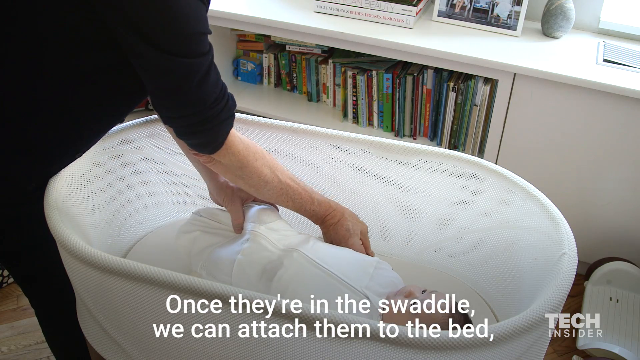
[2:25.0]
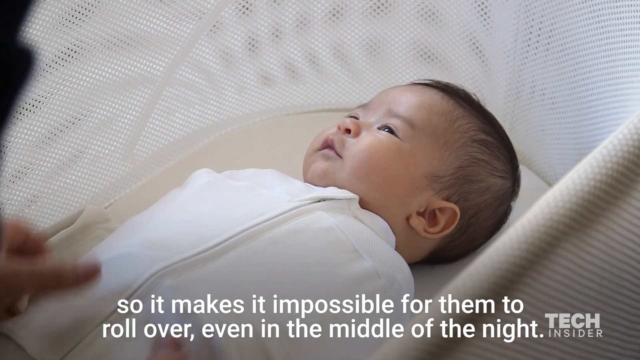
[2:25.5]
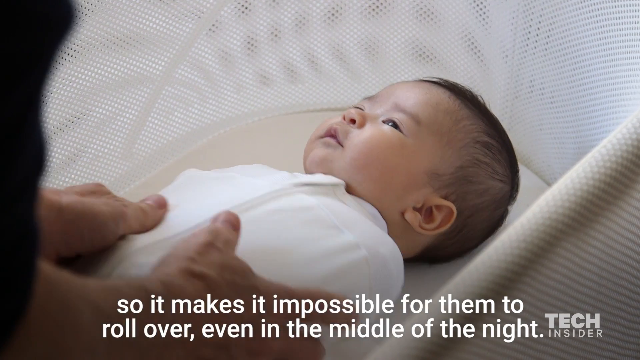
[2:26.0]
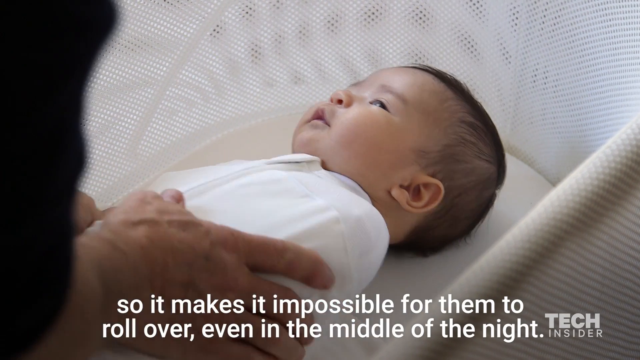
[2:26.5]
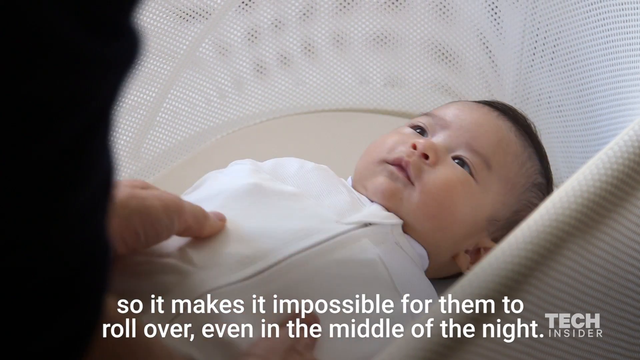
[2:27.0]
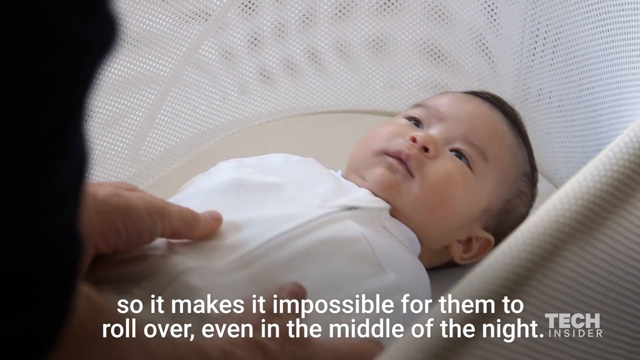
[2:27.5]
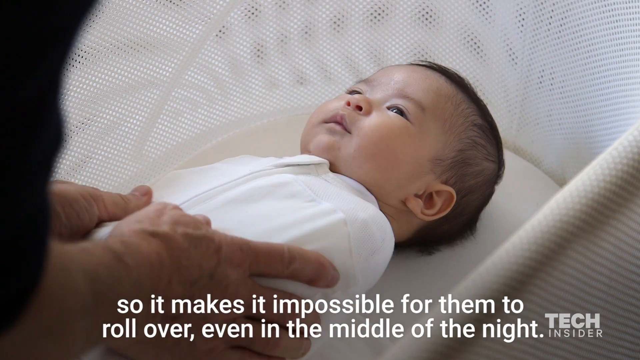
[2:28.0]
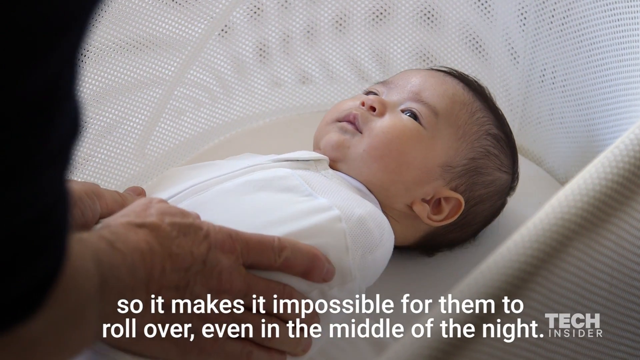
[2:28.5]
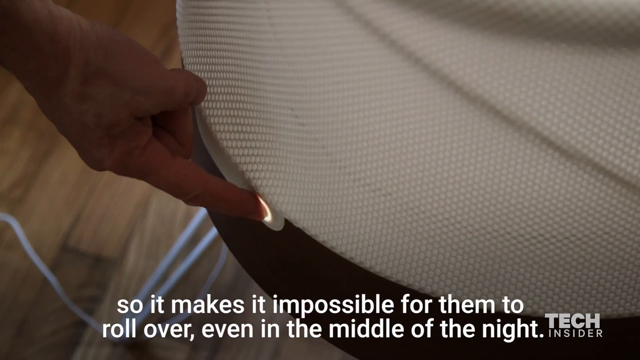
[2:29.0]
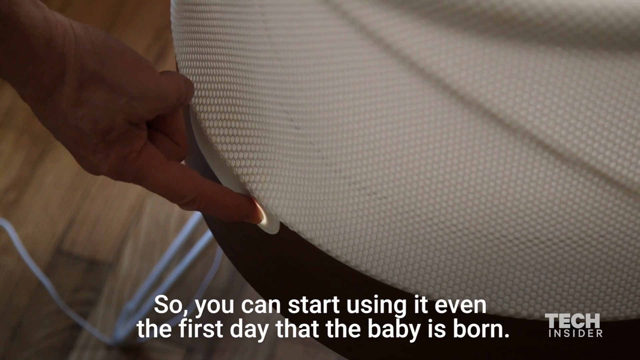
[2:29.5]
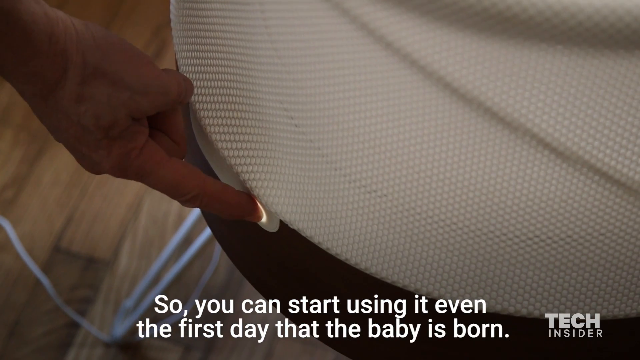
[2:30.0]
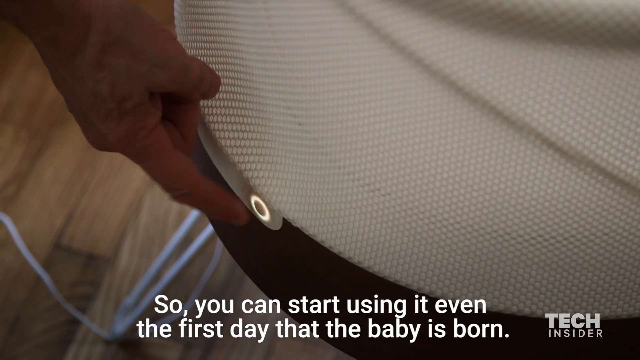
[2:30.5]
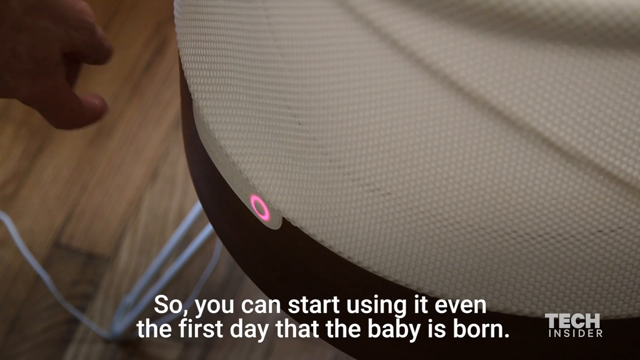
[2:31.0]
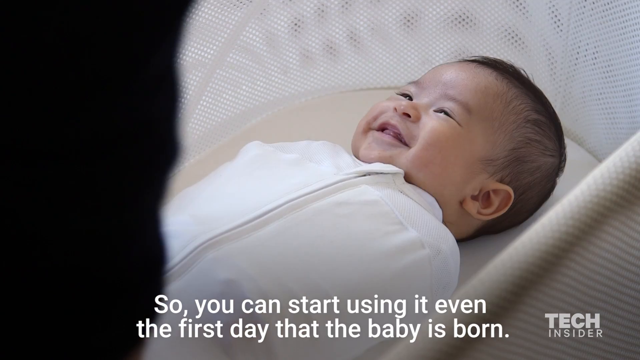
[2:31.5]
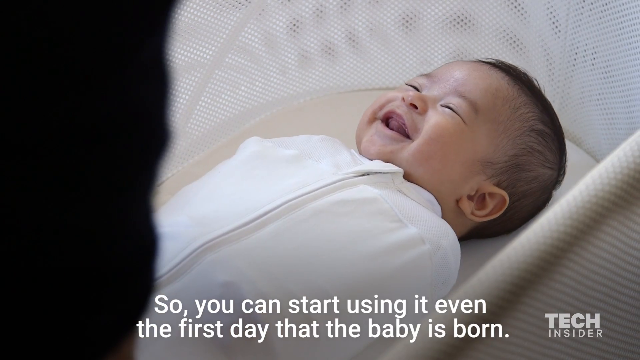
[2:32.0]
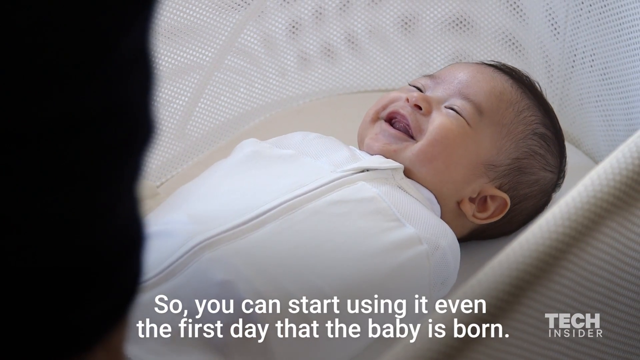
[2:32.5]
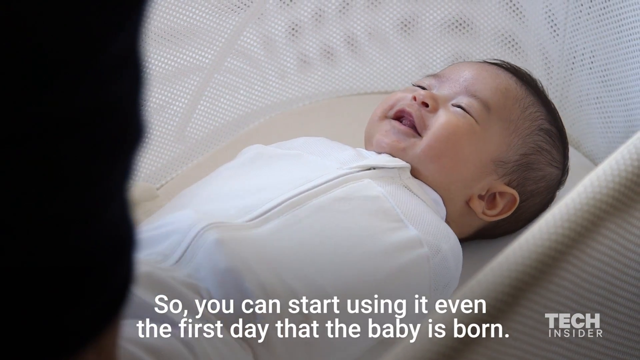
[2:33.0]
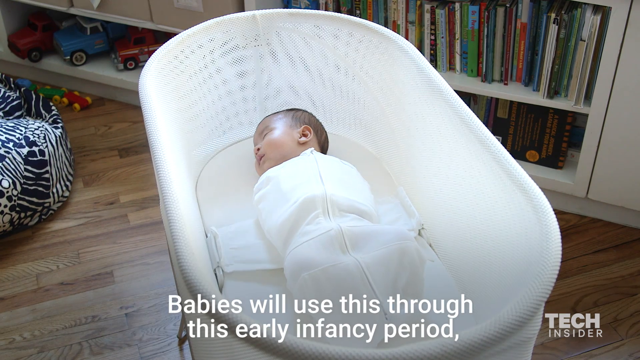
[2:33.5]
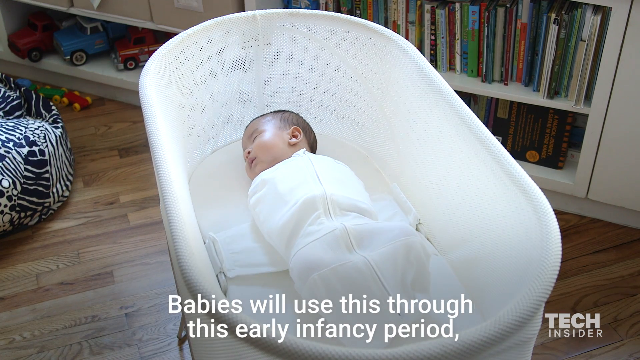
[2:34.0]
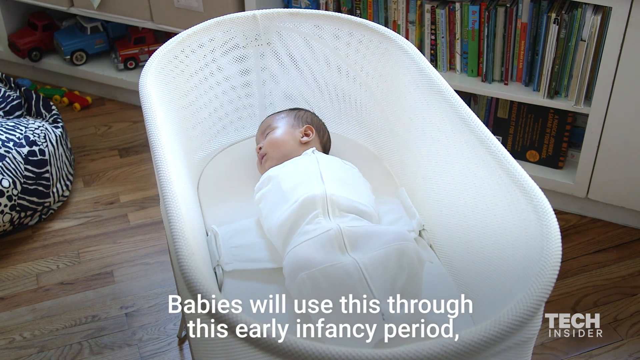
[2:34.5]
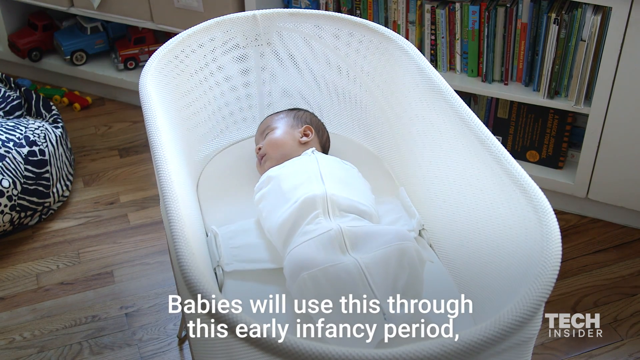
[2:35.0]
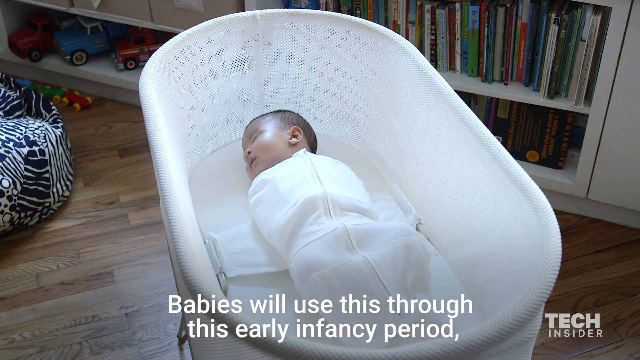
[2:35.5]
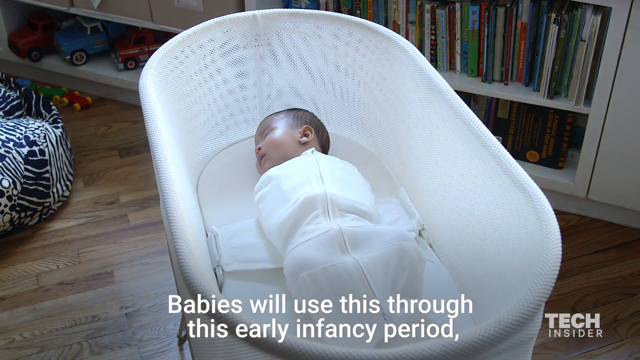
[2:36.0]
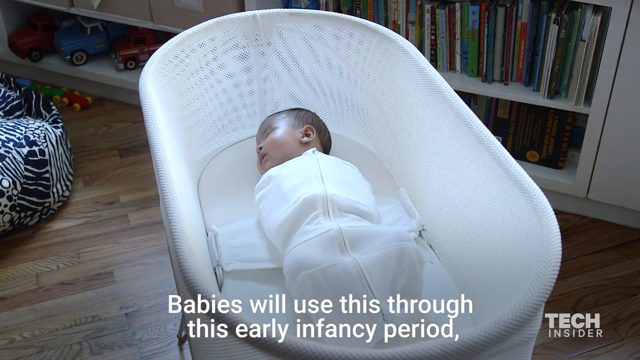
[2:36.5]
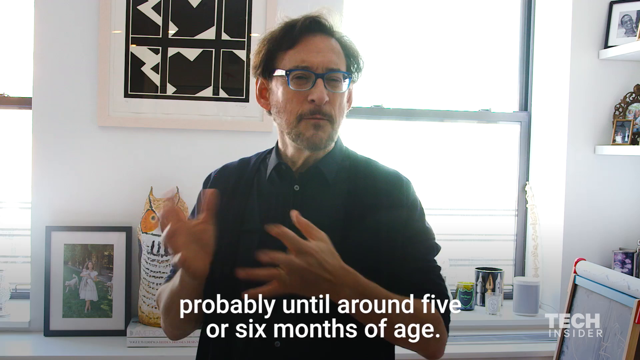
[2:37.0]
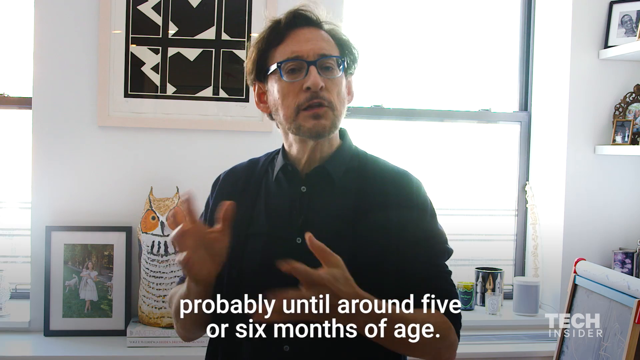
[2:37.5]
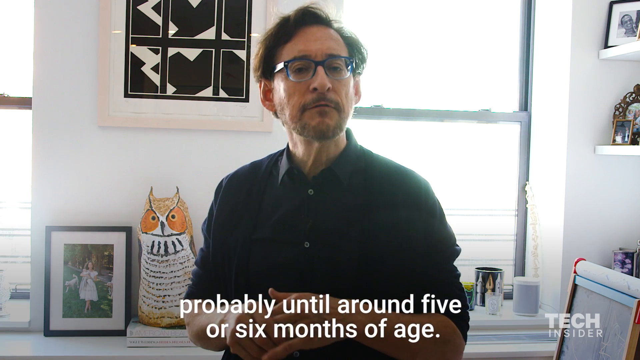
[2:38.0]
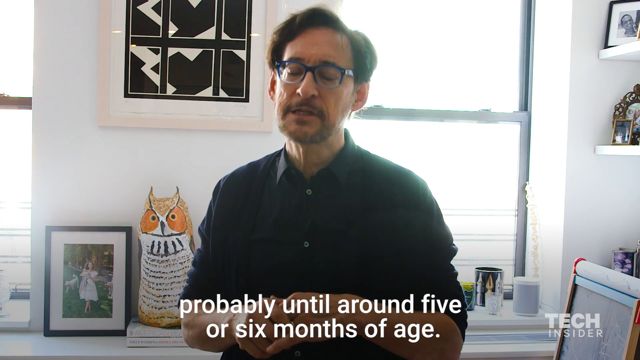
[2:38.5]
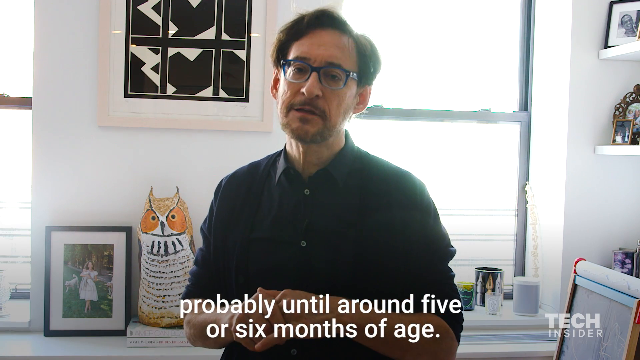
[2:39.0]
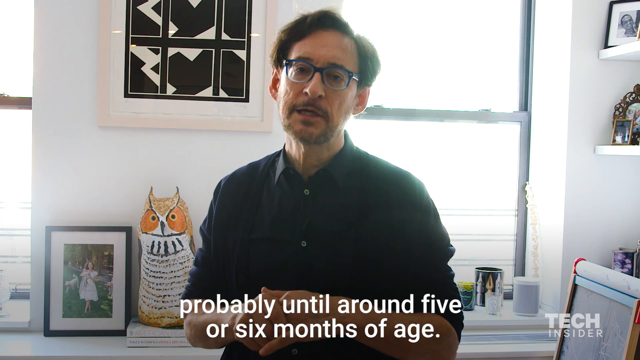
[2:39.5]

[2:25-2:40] The baby boy moves side to side with his eyes closed, wrapped in a white blanket that surrounds him. He looks very happy and contented as he looks at the man. The crib is white, and bright light comes through the windows in the back.